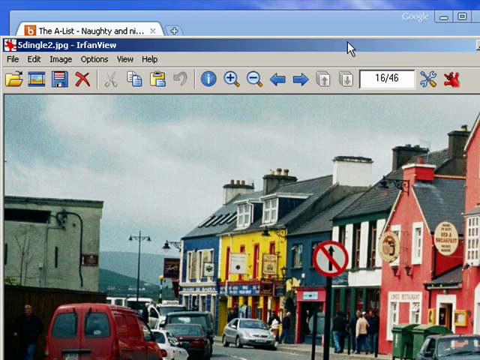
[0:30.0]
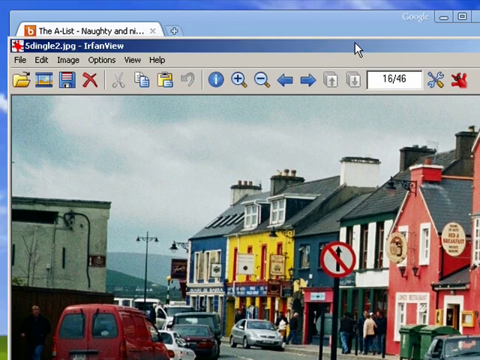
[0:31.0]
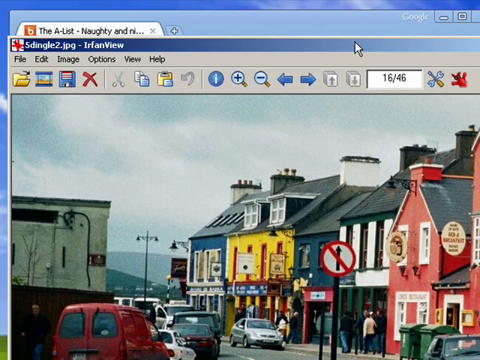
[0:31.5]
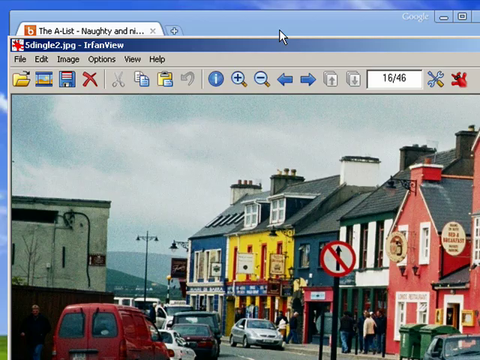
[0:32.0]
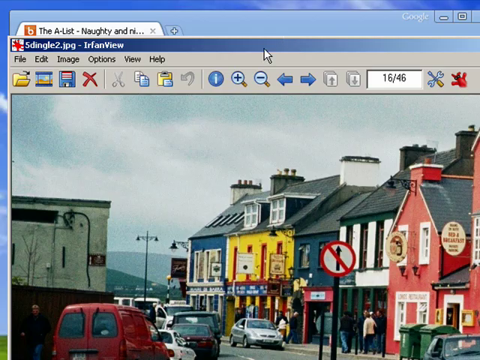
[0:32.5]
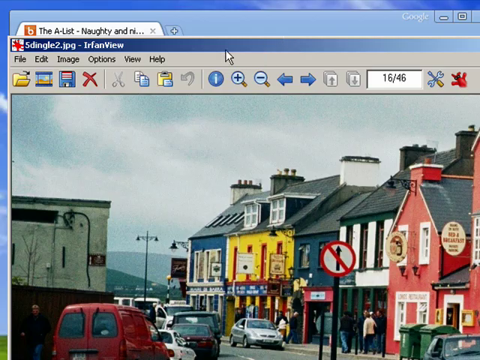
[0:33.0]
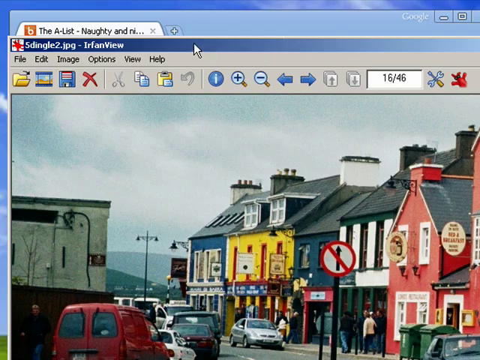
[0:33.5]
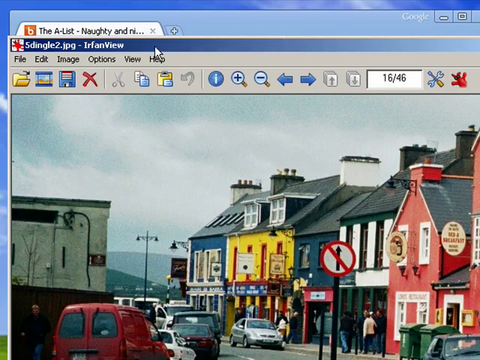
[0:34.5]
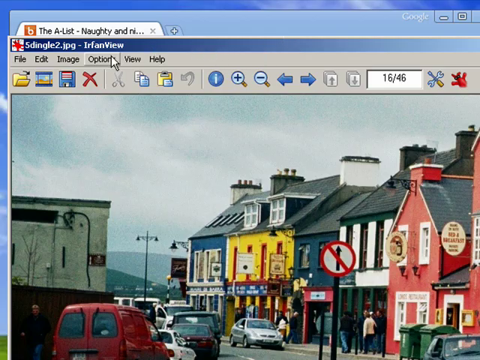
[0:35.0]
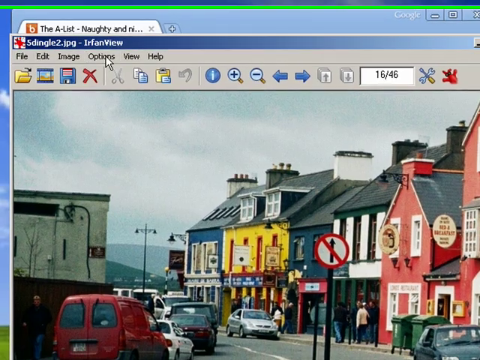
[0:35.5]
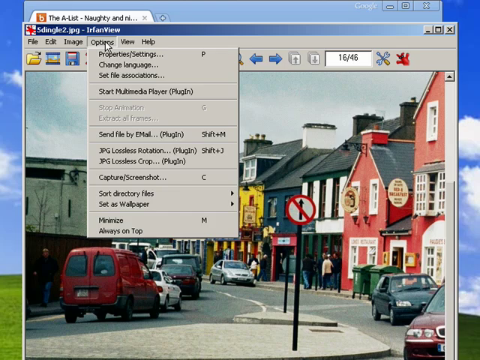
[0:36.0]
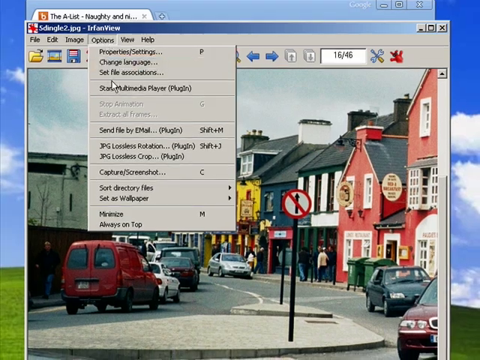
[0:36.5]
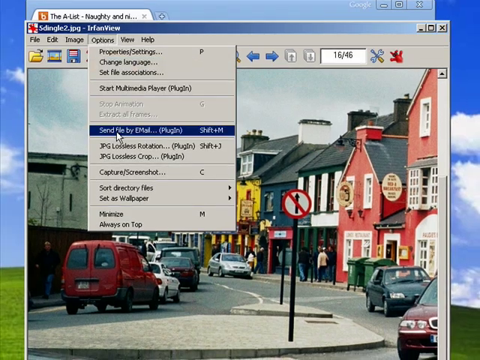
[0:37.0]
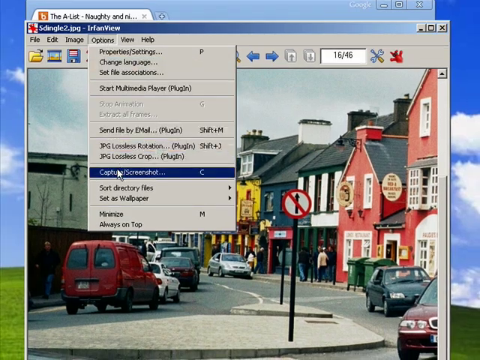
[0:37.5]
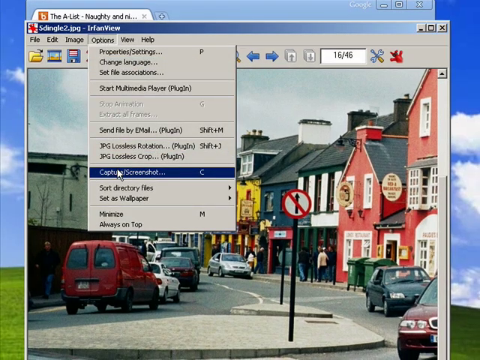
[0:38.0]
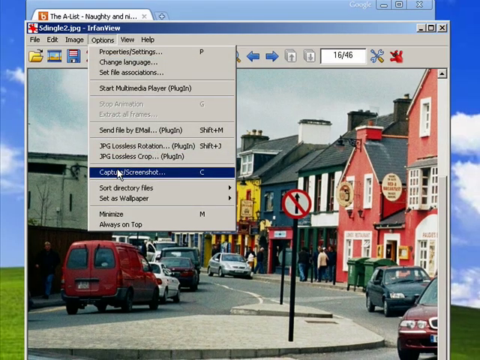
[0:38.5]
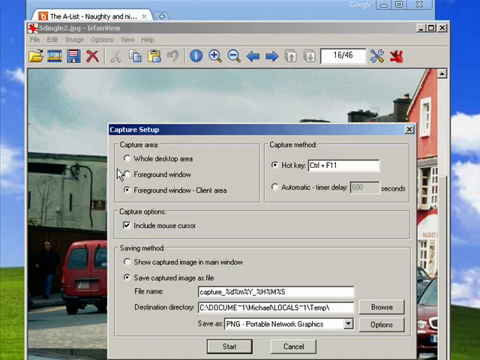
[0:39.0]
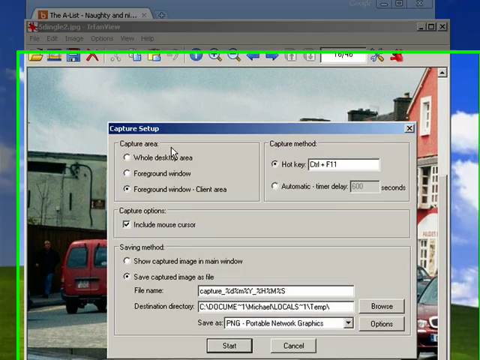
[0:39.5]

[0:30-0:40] The screen is focused on the top of the image, showing the tab that says "the A-list, naughty and nice", with the PNG image of the European streets and houses overlaid over it. There are some tool icons at the top of the screen for editing the photo, as well as some headers. The mouse moves and selects the options tab, which opens a drop-down menu, and the mouse selects "Capture screenshot". A secondary drop-down appears, showing a capture setup window with settings to change.